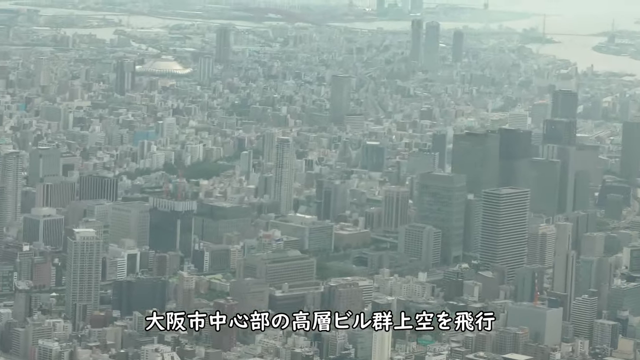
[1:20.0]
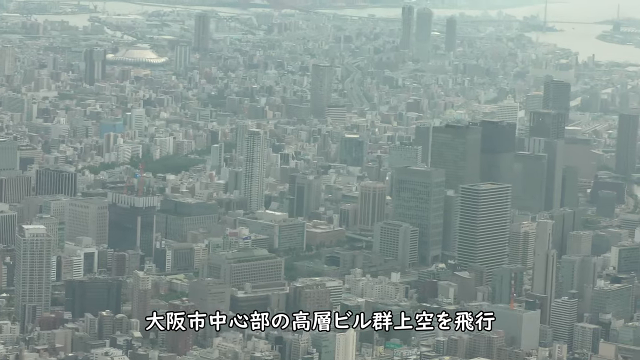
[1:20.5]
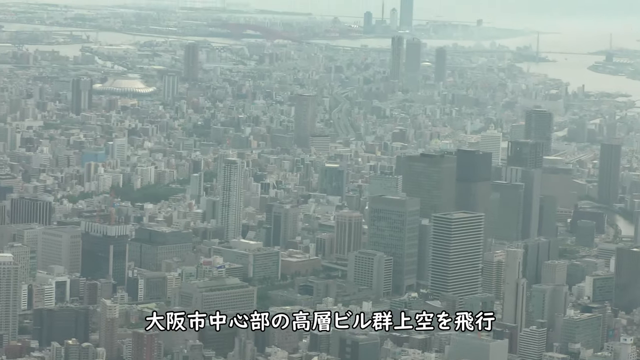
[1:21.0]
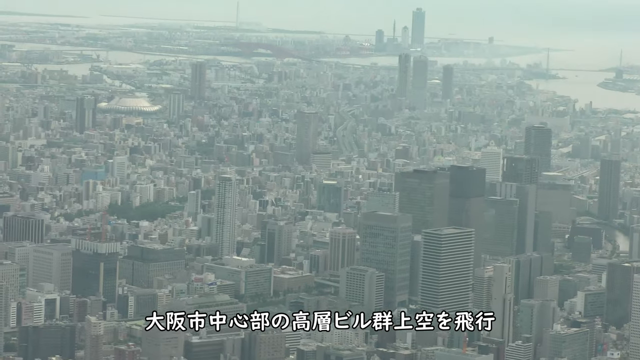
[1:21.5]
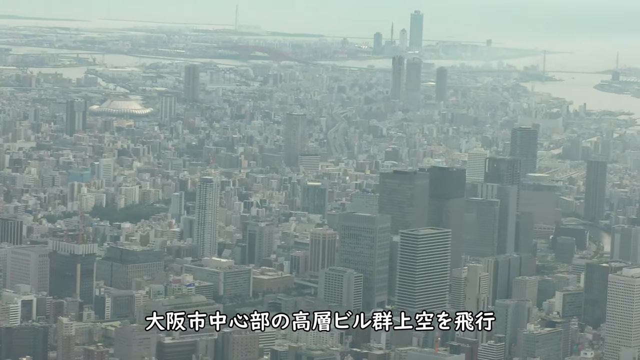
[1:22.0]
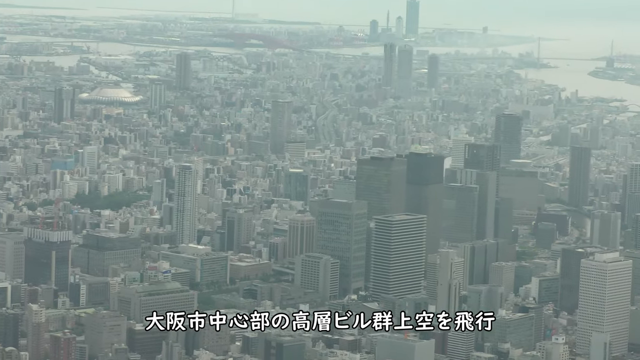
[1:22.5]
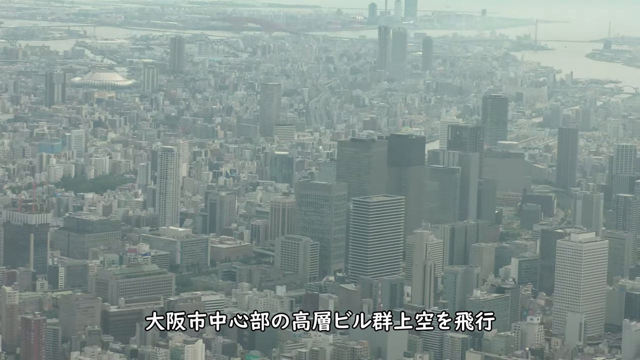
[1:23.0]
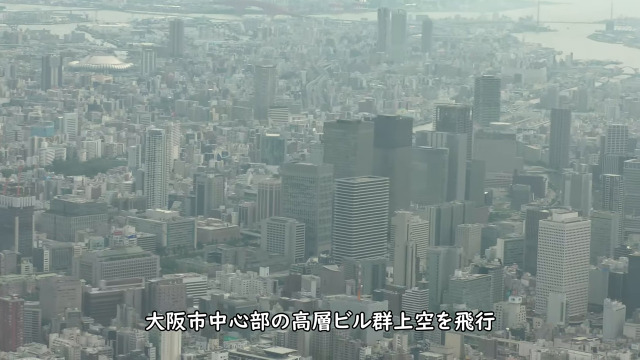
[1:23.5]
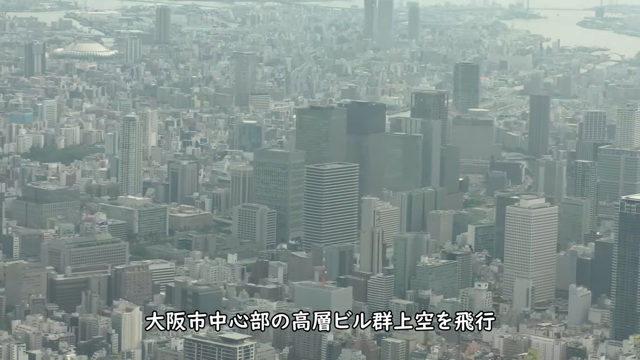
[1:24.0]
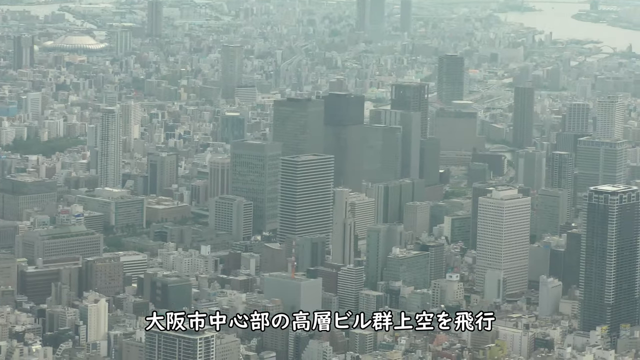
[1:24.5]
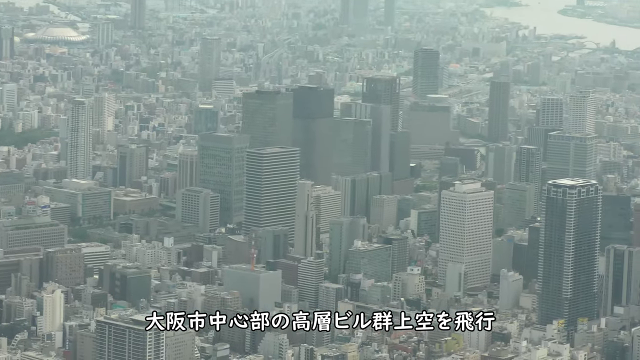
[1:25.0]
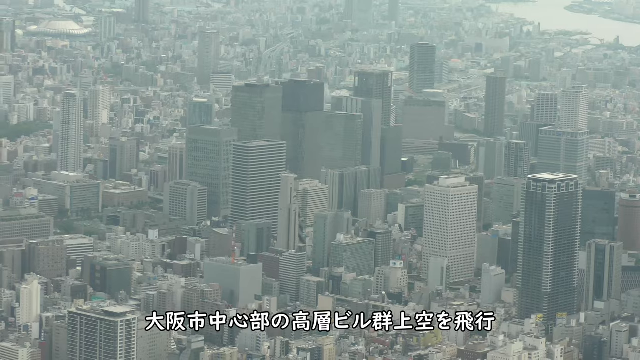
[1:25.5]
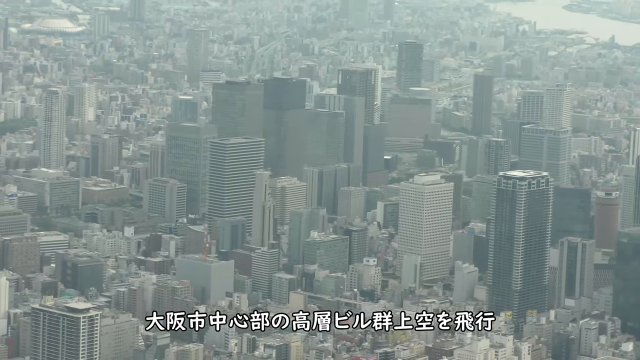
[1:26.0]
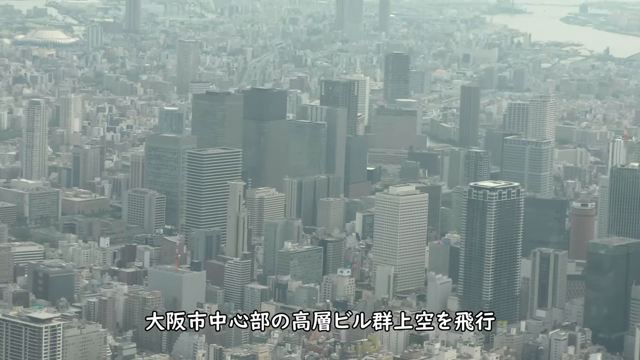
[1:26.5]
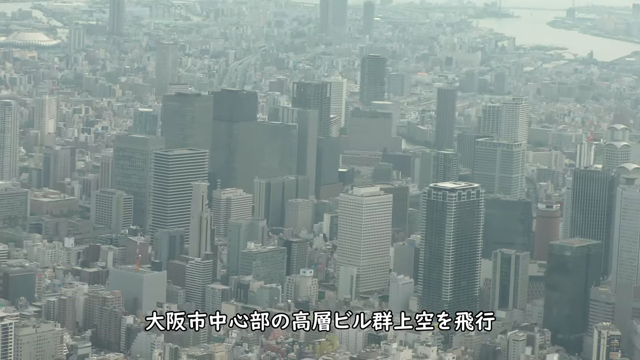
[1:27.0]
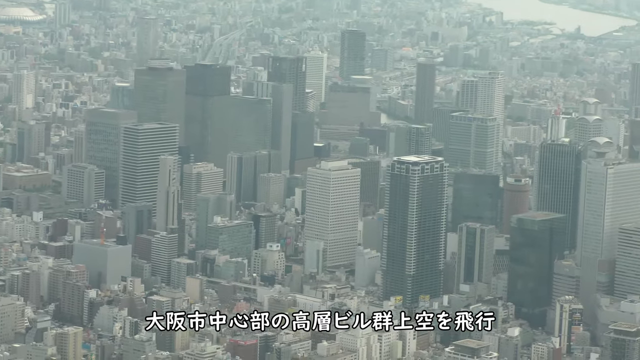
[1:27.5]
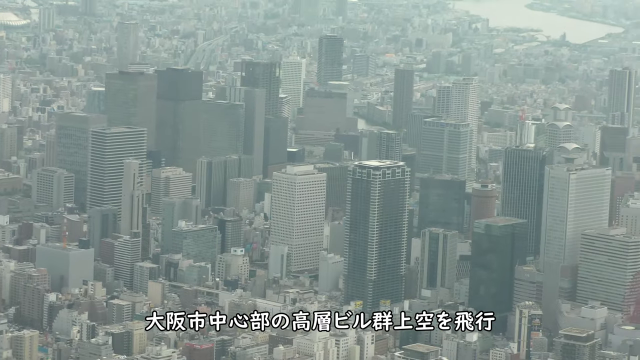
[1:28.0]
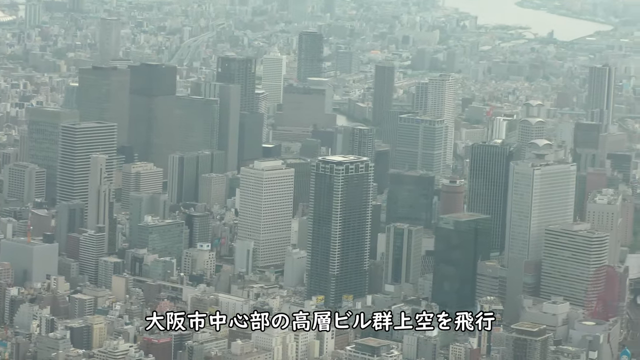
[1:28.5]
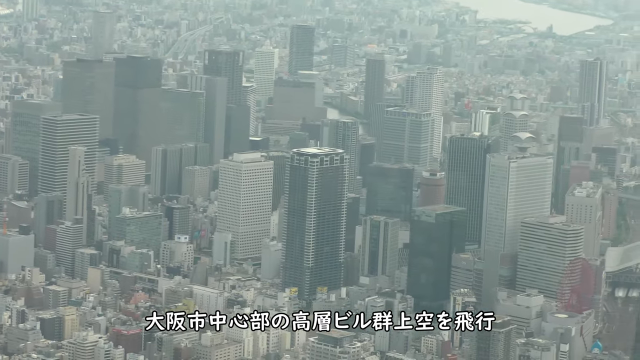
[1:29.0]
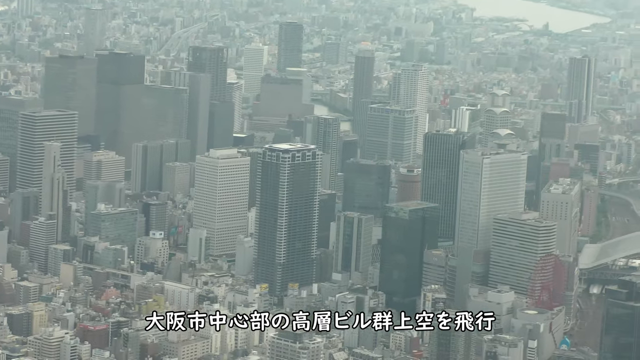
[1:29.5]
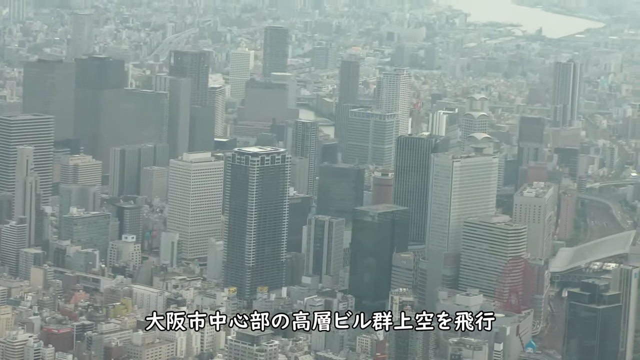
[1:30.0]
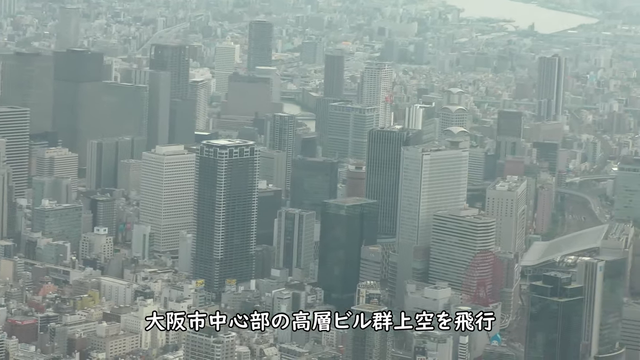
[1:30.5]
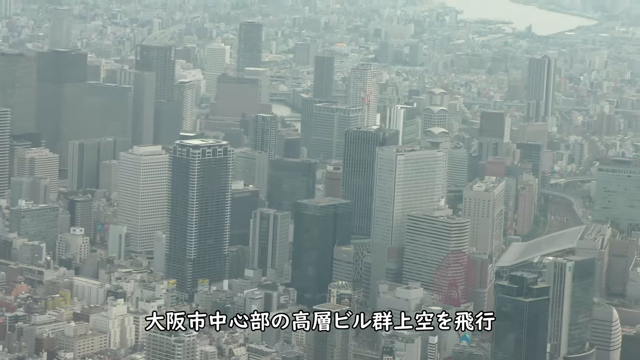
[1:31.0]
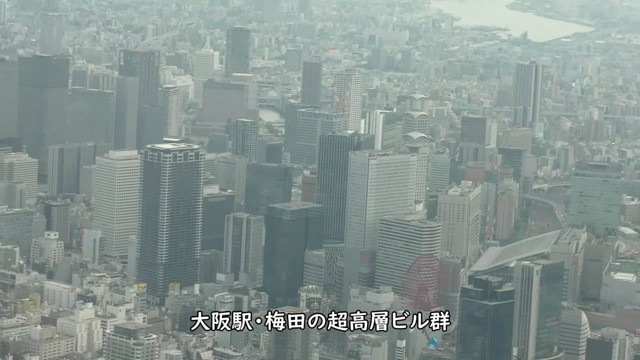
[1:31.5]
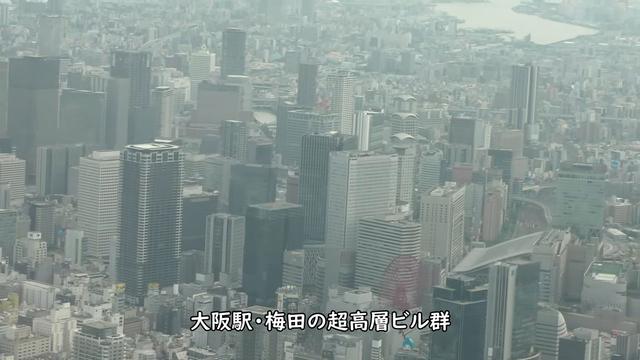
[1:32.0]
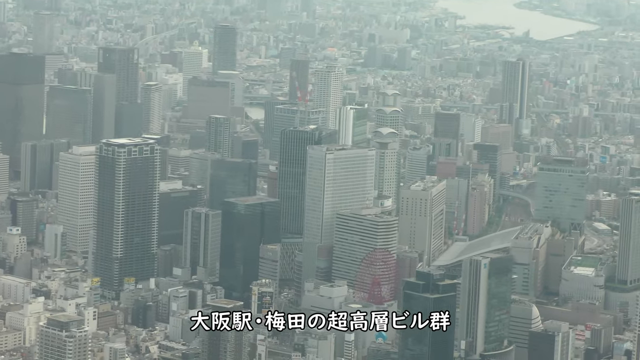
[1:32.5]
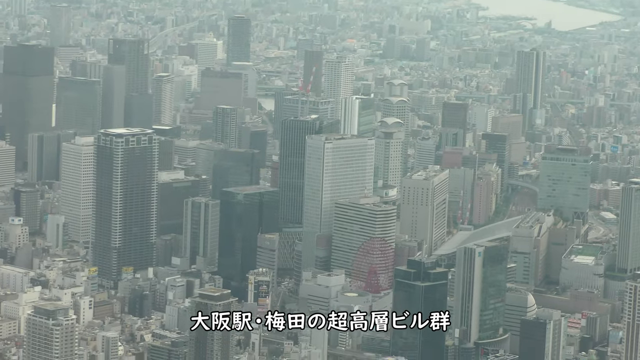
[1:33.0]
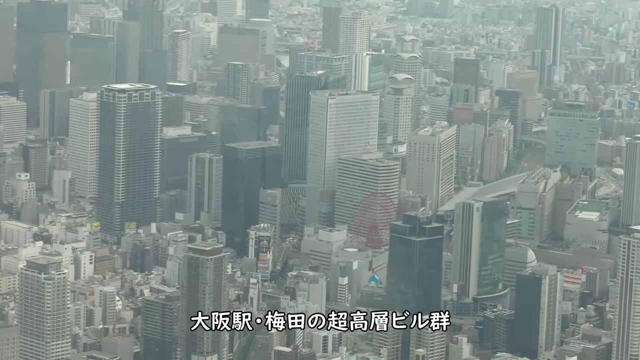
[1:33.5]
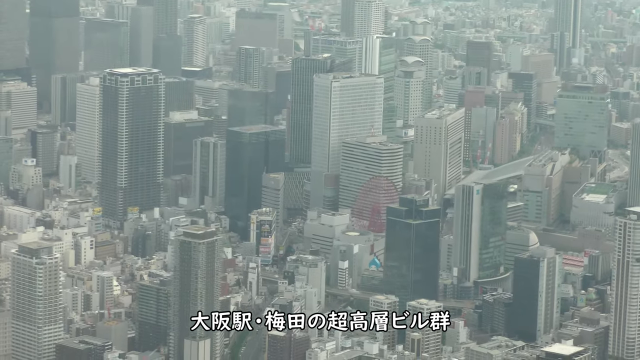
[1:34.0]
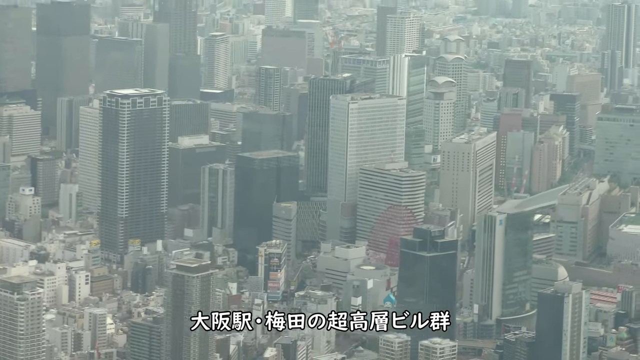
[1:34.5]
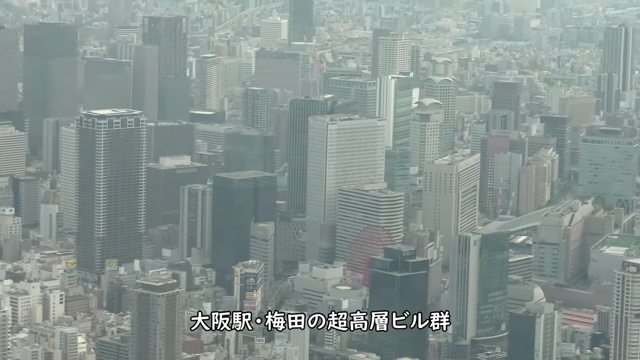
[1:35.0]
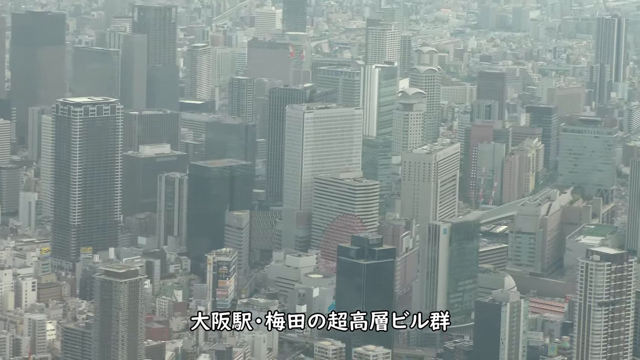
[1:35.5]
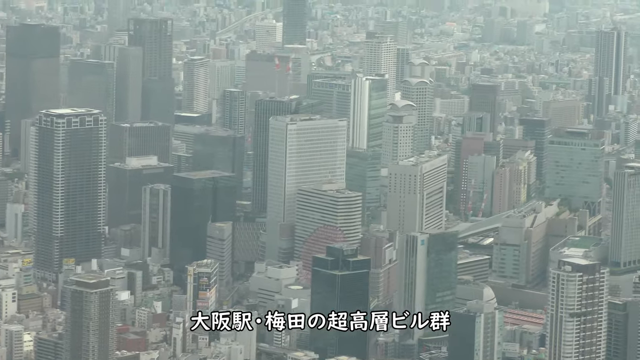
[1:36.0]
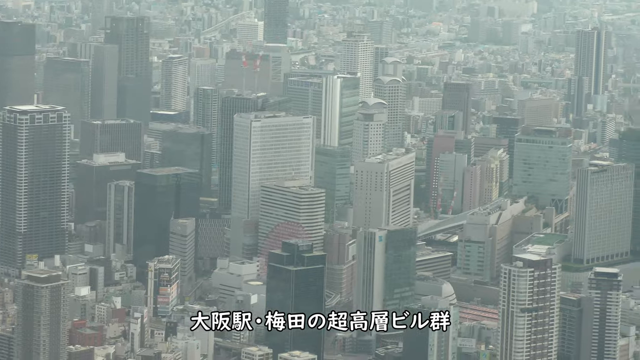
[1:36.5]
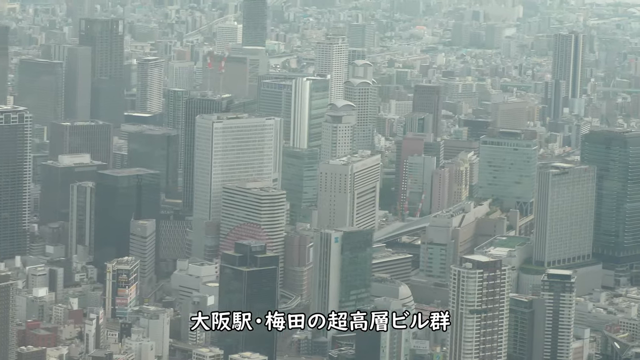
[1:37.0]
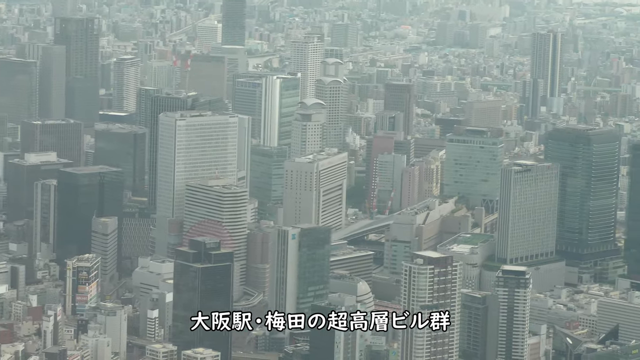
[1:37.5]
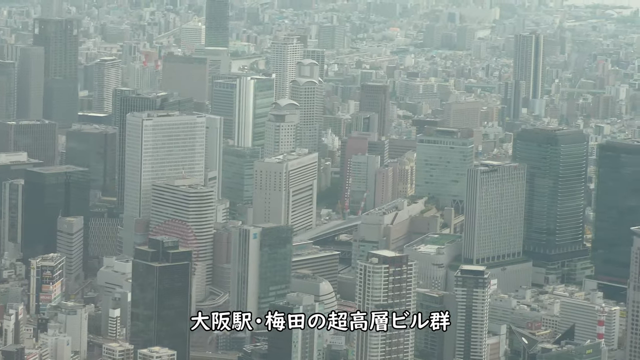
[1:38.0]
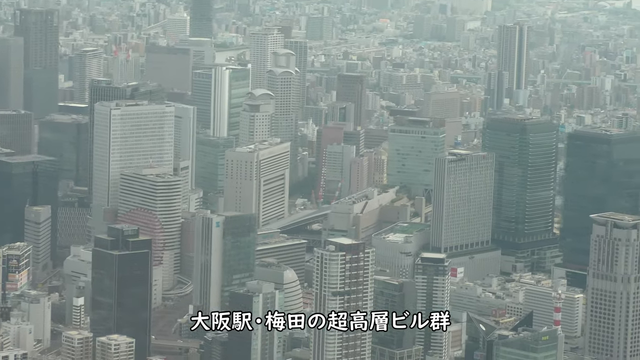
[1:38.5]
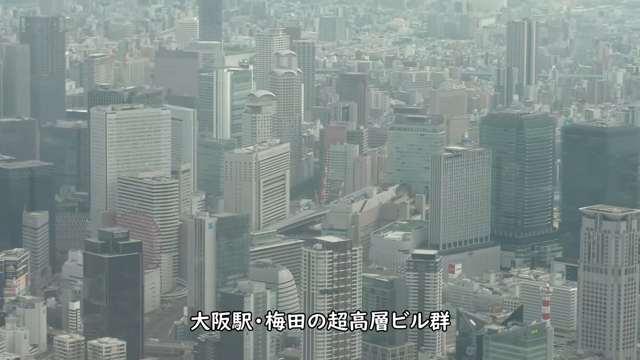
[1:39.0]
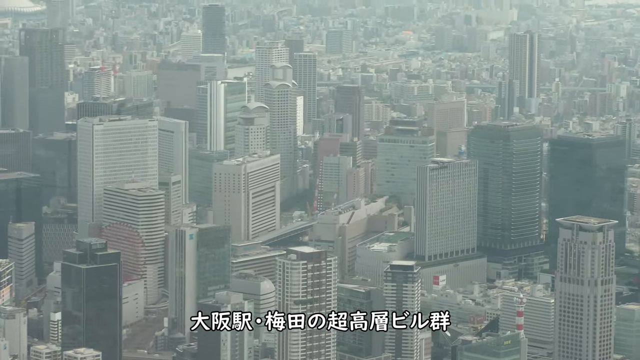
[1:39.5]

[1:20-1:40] The Tokyo, Japan skyline shows buildings of various shapes and sizes. The shot appears to focus first on the main downtown area, which appears to have the tallest and most tightly clustered buildings in Tokyo. In the center the buildings are dark green and black, and around them are slightly shorter, light gray buildings whose windows appear long. The camera pans out, giving a more panoramic view of these taller buildings in the heart of Tokyo, and the plane appears to be flying in a circular pattern. The winding river in the background appears slightly muddy. Japanese text in various shapes, bold and white, is at the bottom of the screen.